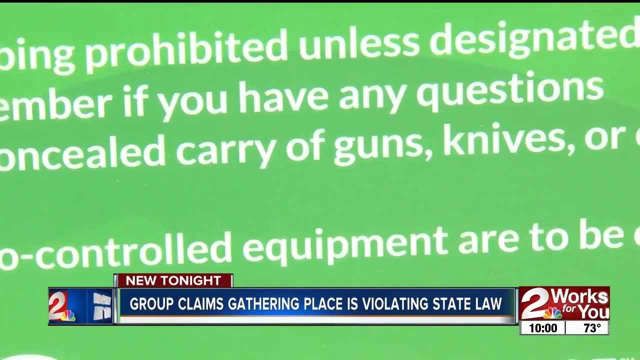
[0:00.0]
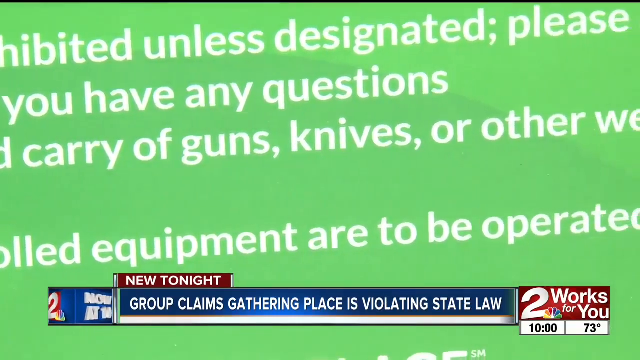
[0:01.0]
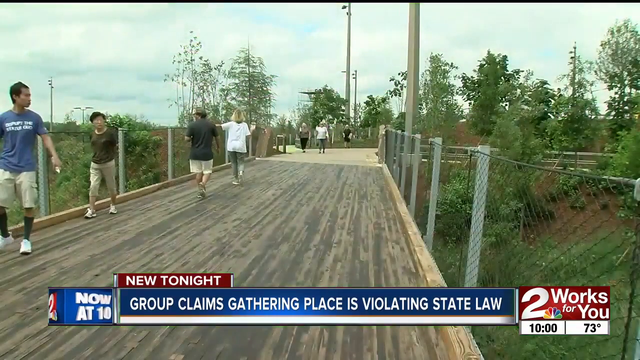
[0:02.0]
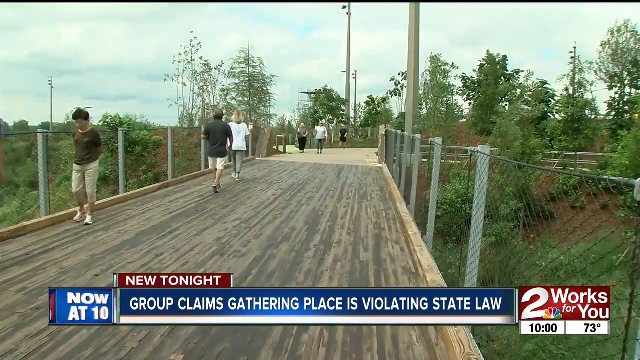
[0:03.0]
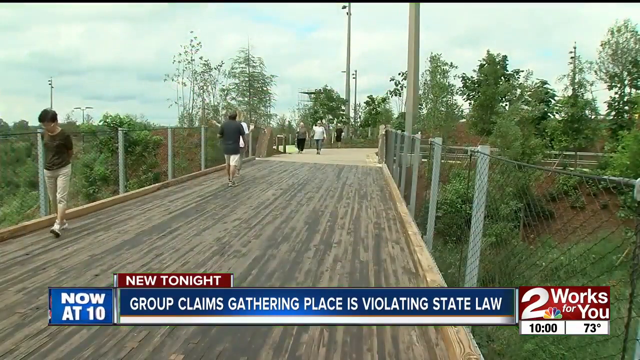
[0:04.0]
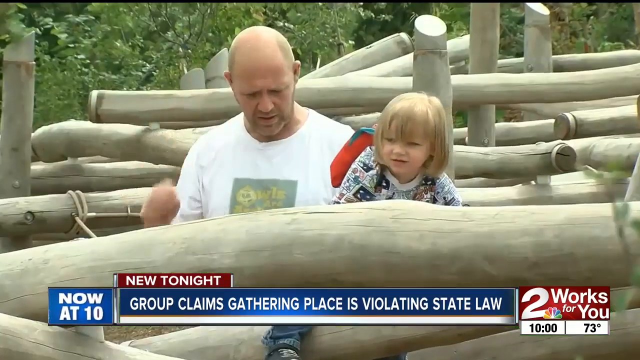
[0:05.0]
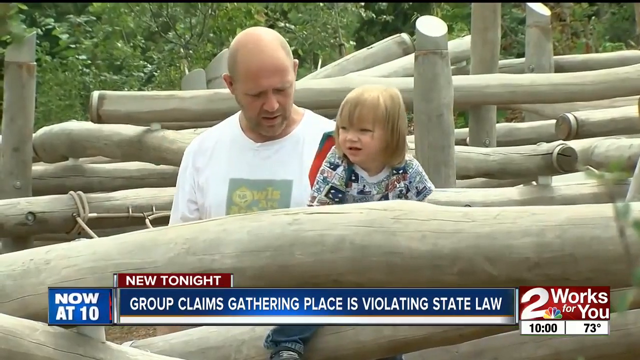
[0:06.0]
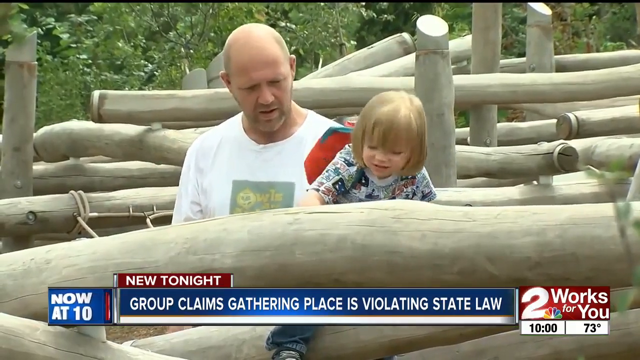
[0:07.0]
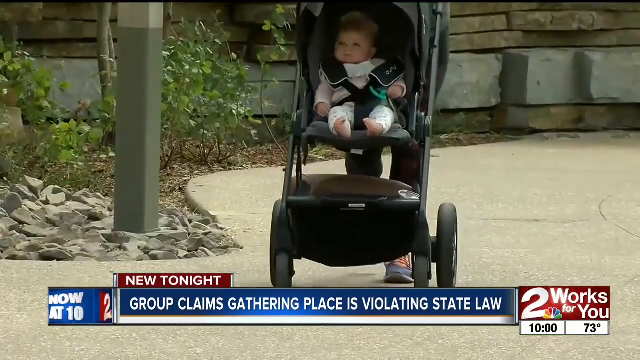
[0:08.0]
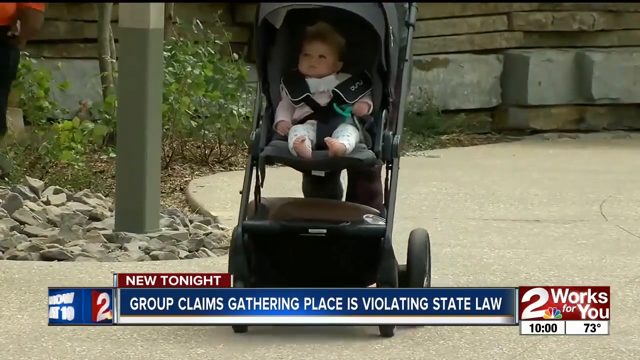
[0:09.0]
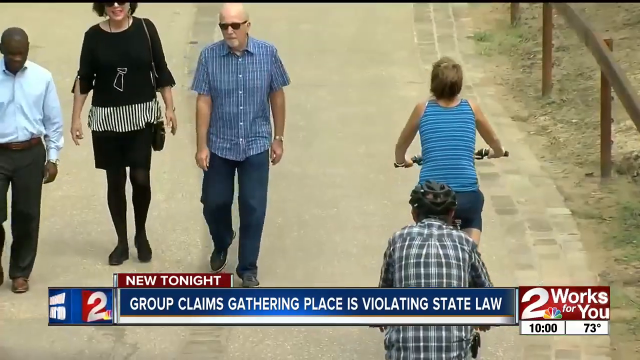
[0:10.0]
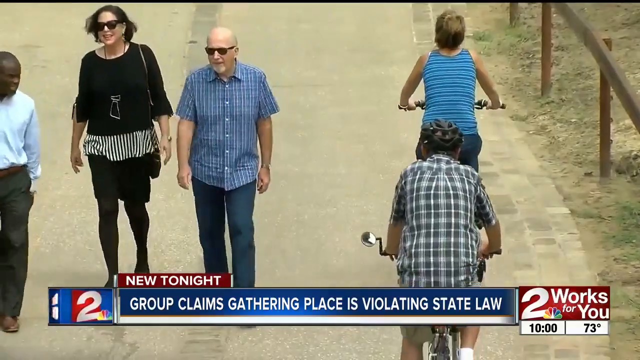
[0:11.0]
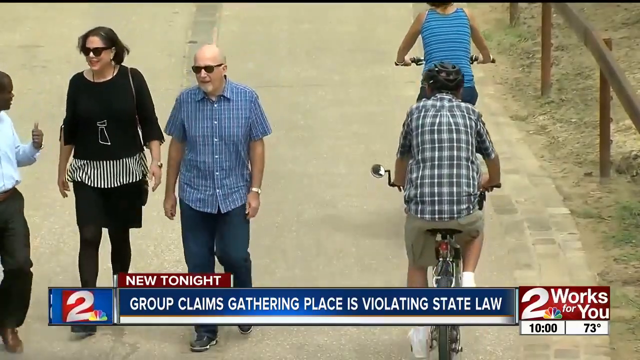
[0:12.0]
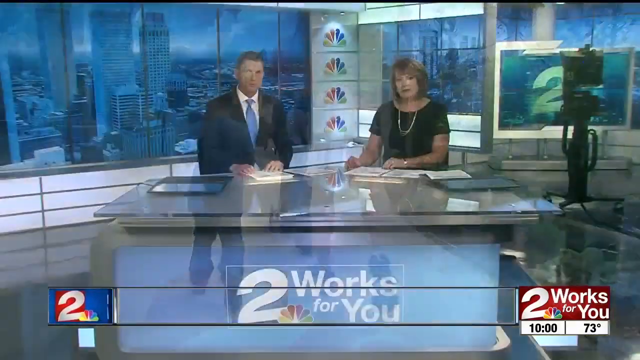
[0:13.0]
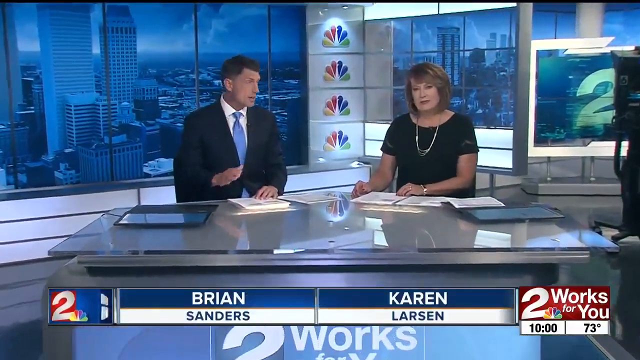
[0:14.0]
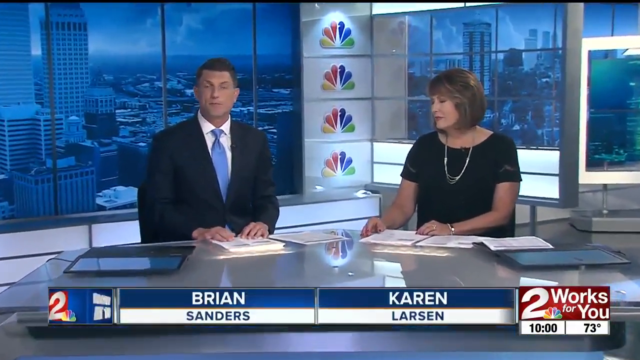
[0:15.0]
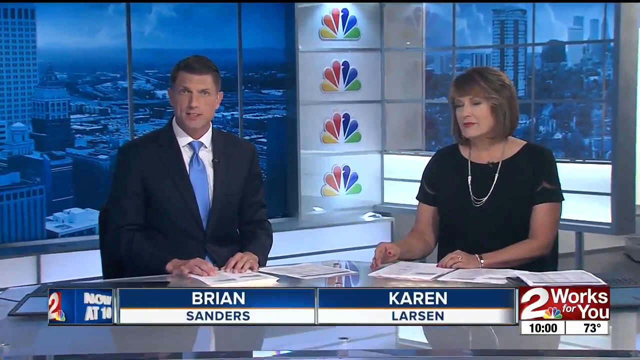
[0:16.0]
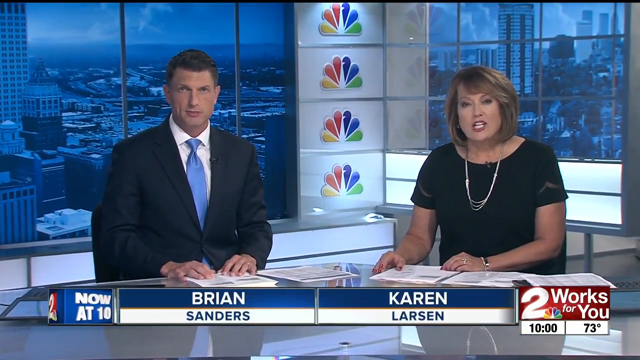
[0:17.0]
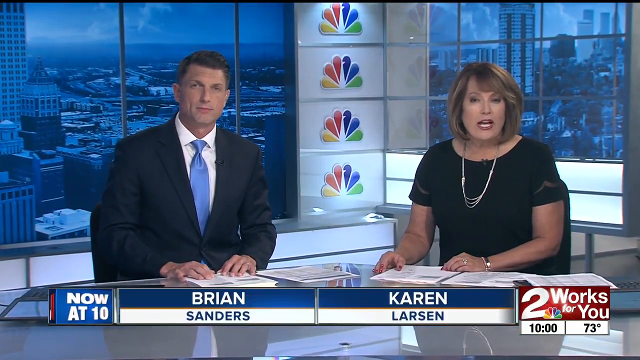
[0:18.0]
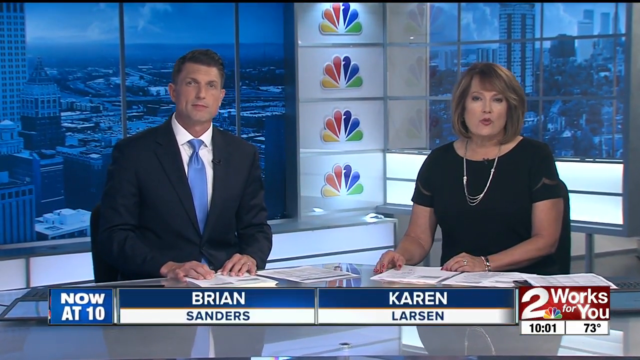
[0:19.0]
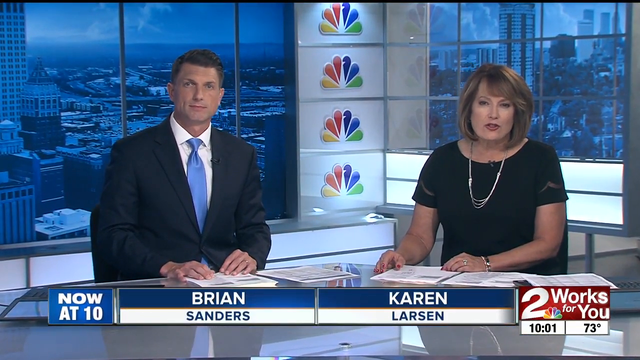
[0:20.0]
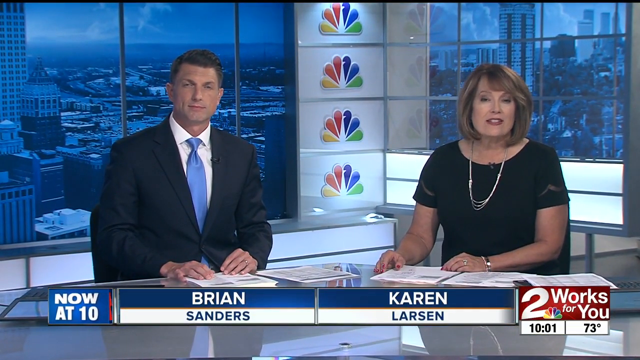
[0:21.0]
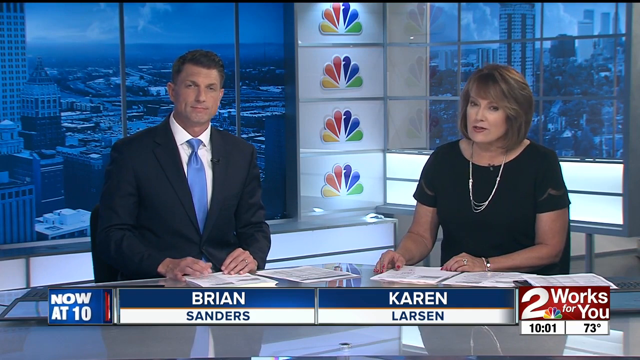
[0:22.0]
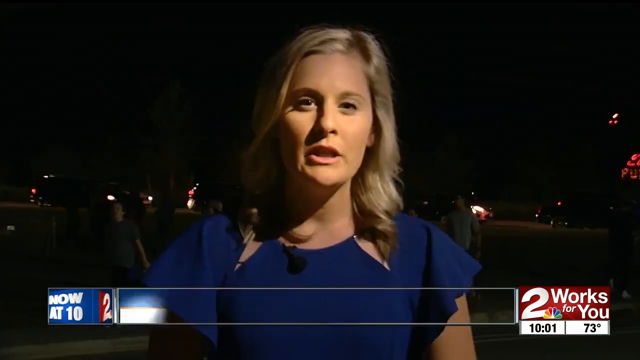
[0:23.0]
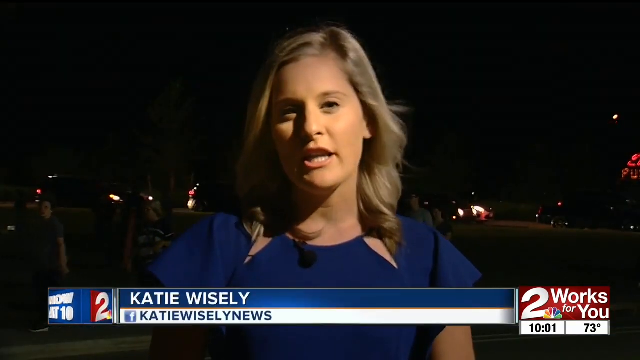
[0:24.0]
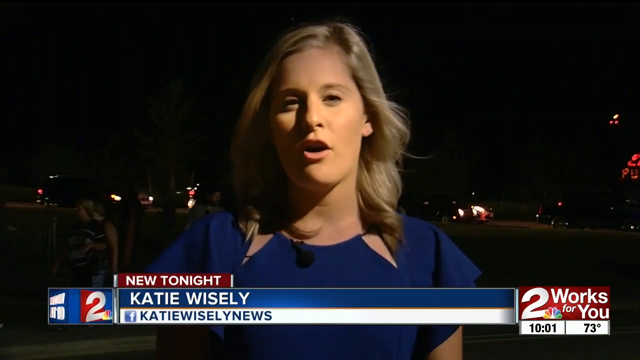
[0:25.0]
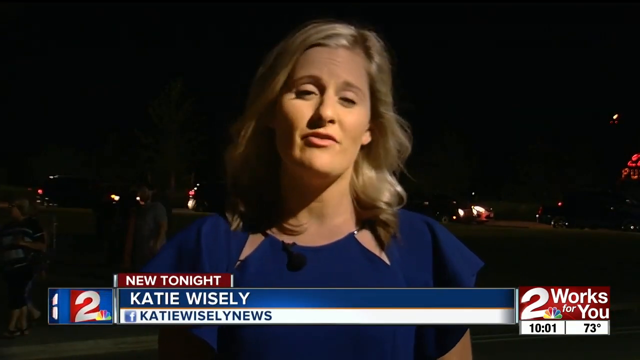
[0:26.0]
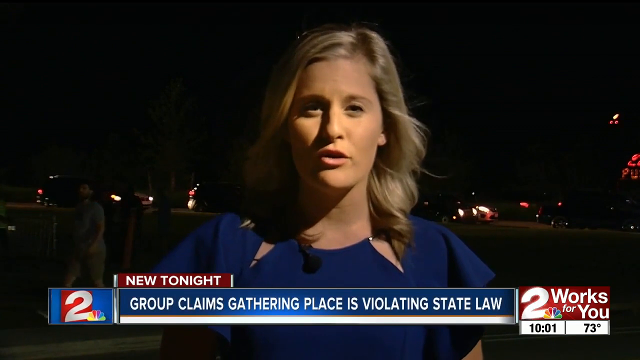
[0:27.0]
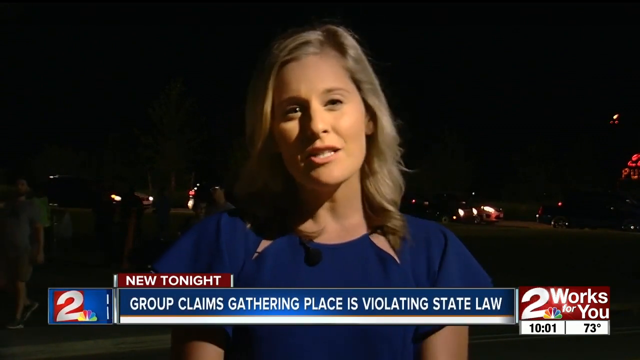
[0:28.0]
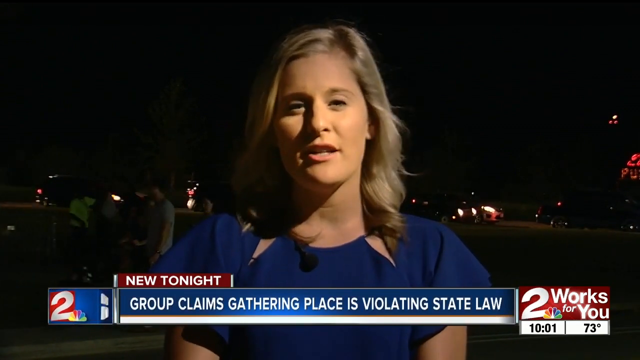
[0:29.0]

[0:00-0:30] Words fill the screen. People walk around a bridge, and a father with his child climbs on some logs. A woman walks with a baby in a stroller outside next to a park. Three elderly people walk around, and two elderly people ride bikes around the place. The video switches to a news report station with Brian Sandler and Kevin Lesley talking; the man wears a black suit and the woman wears a black dress with a chain around her neck as she answers some questions. Next, a woman in a blue dress is interviewed, and the words "violating state law" appear while the woman seems to be explaining the situation of the place.